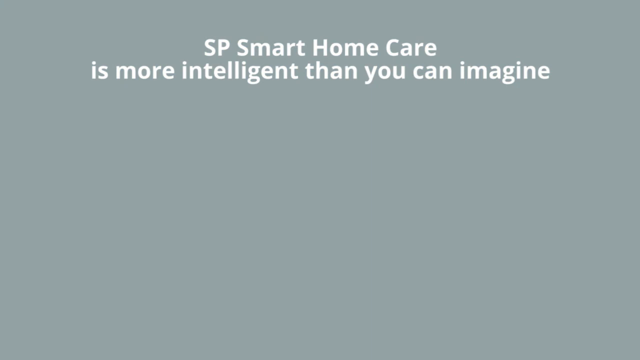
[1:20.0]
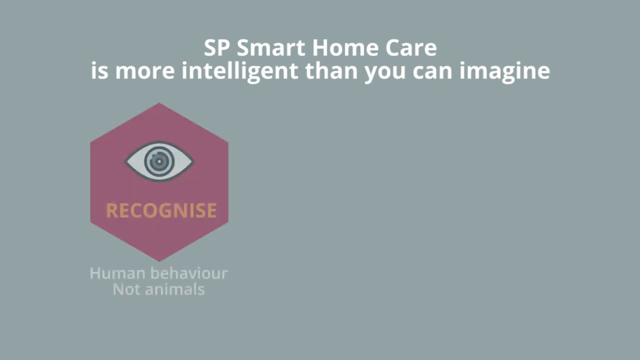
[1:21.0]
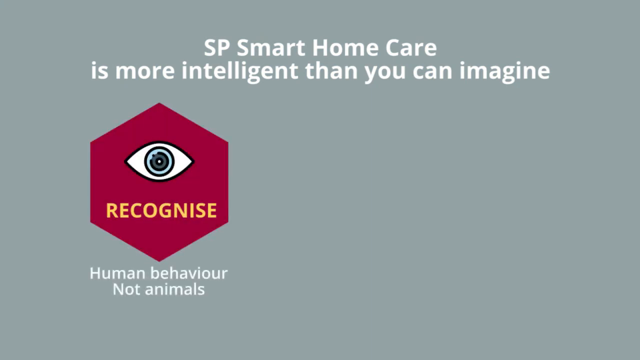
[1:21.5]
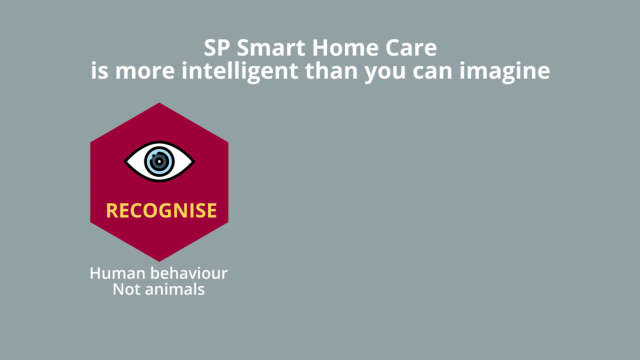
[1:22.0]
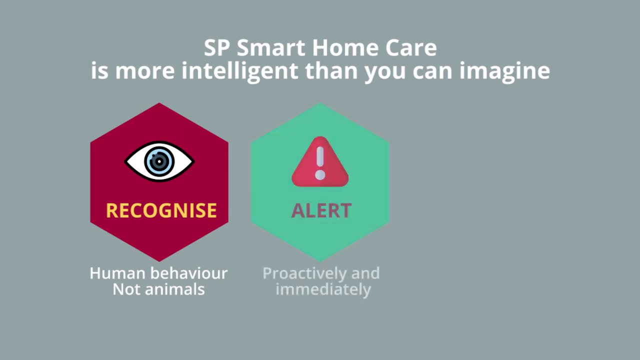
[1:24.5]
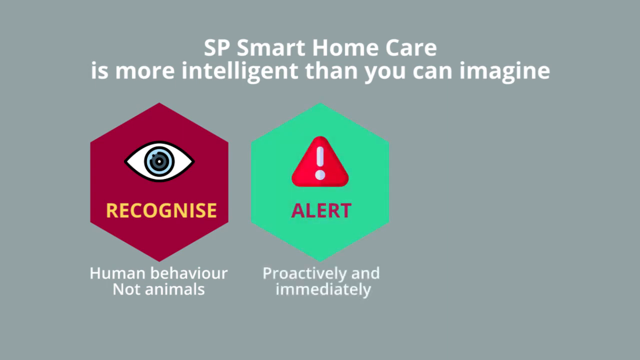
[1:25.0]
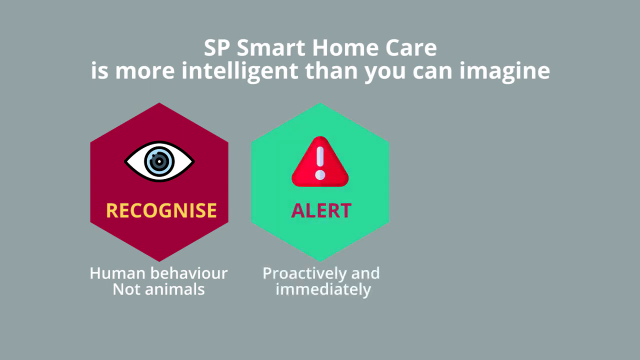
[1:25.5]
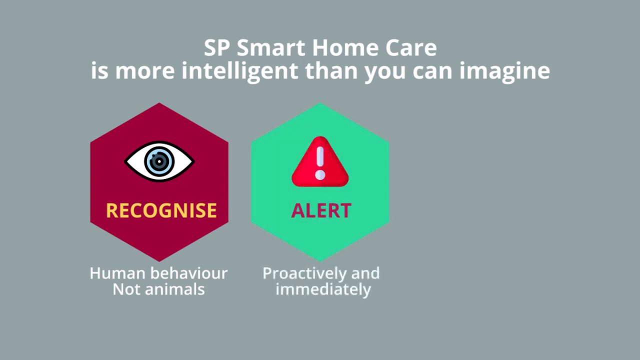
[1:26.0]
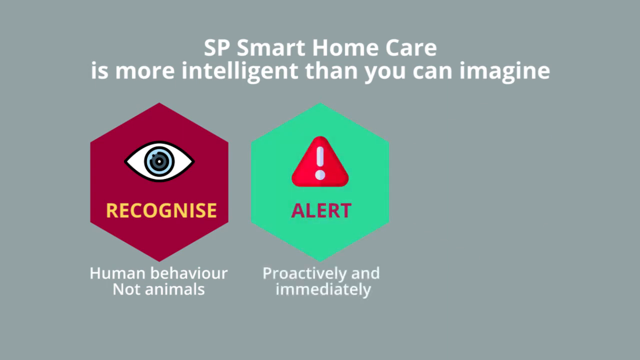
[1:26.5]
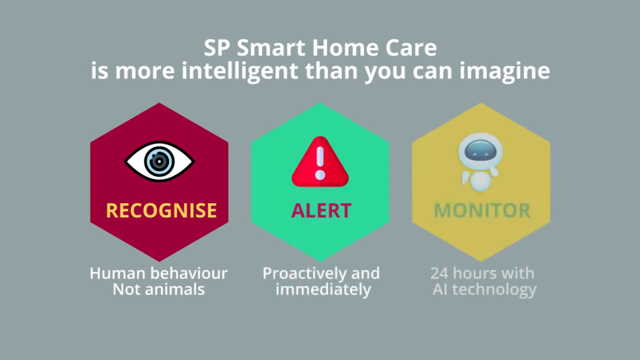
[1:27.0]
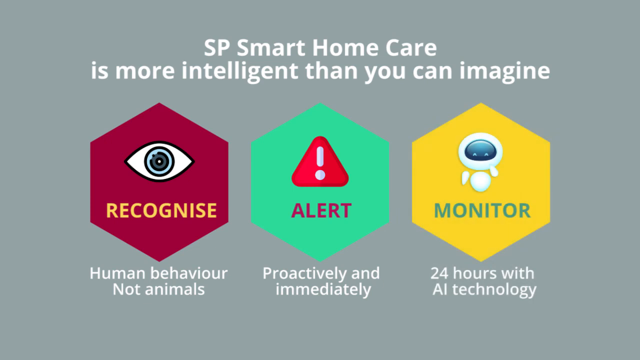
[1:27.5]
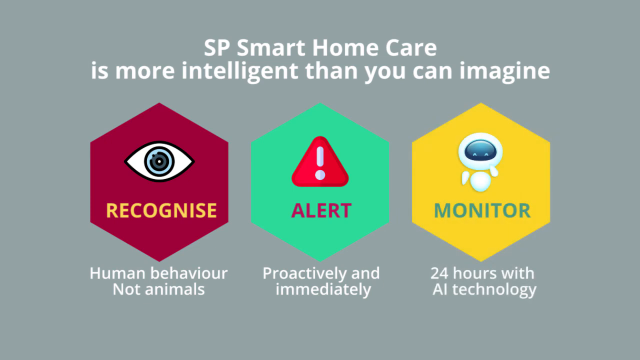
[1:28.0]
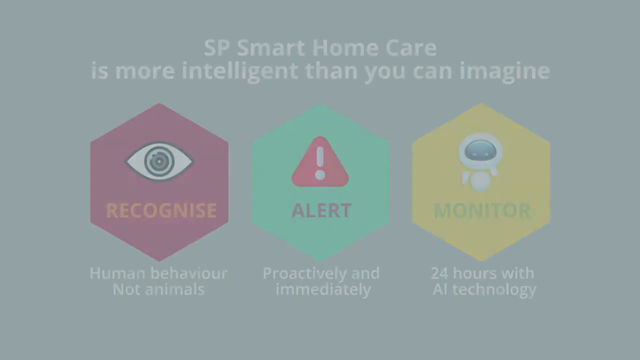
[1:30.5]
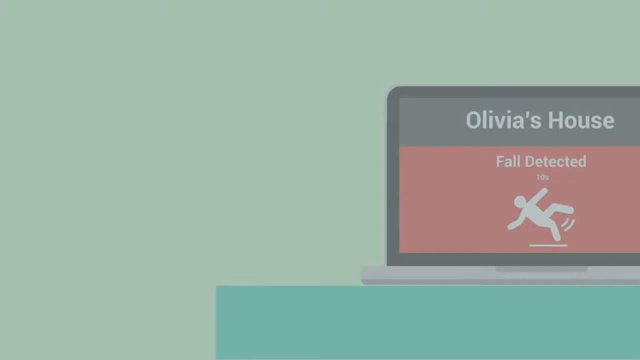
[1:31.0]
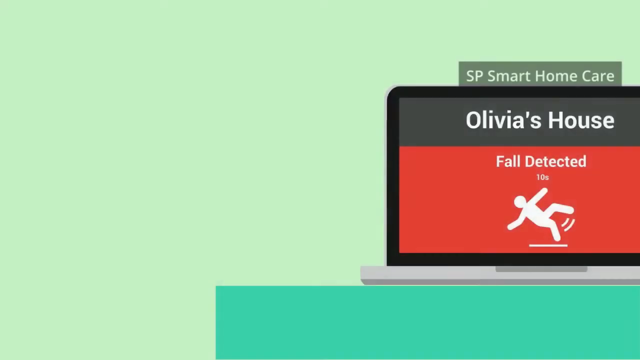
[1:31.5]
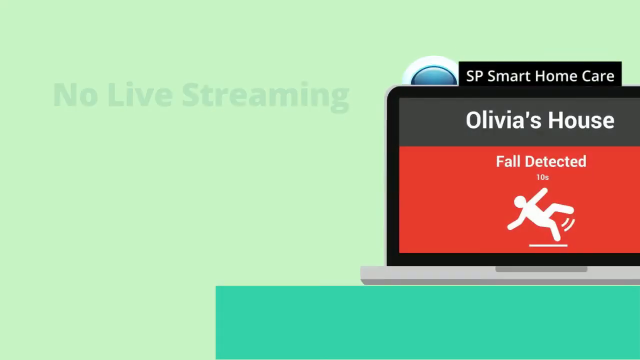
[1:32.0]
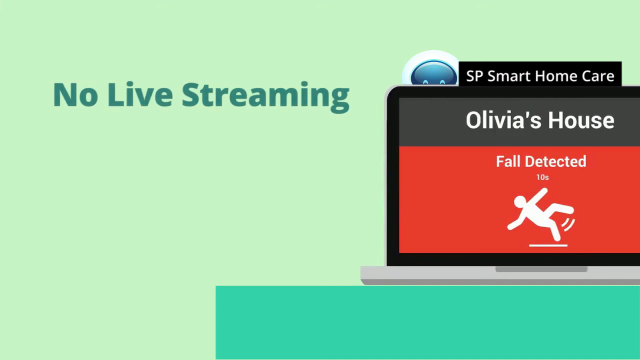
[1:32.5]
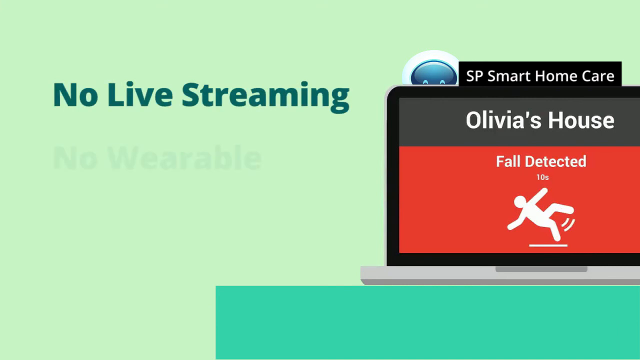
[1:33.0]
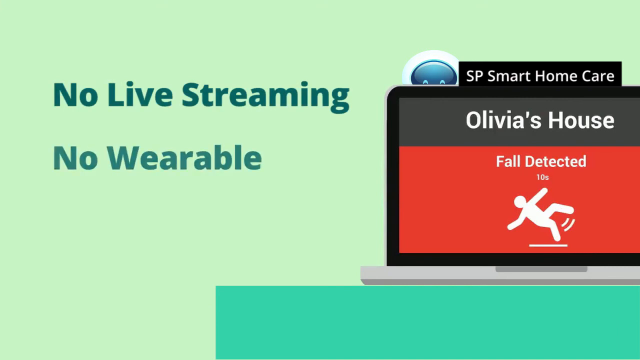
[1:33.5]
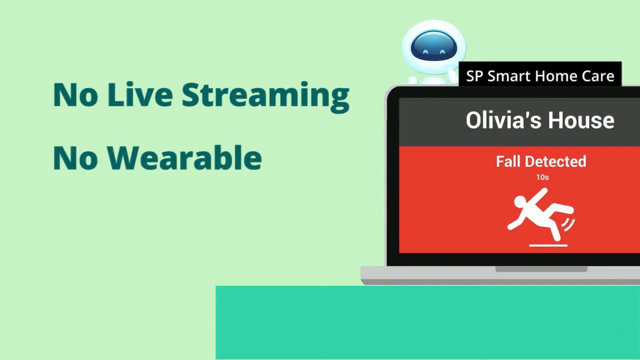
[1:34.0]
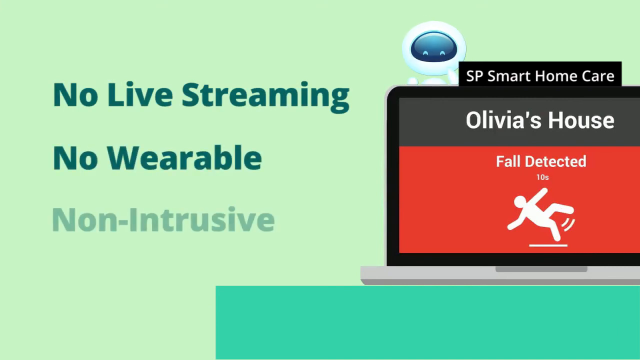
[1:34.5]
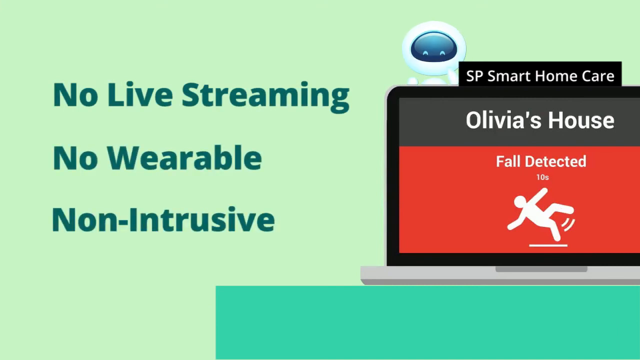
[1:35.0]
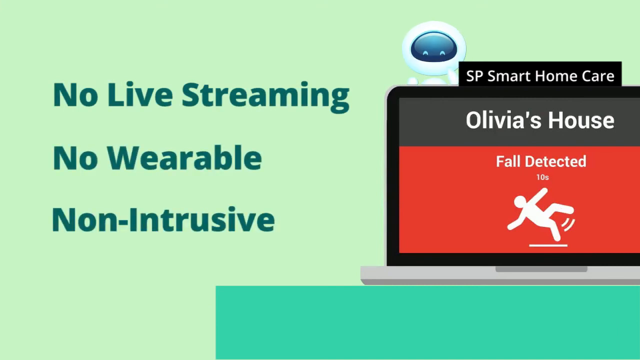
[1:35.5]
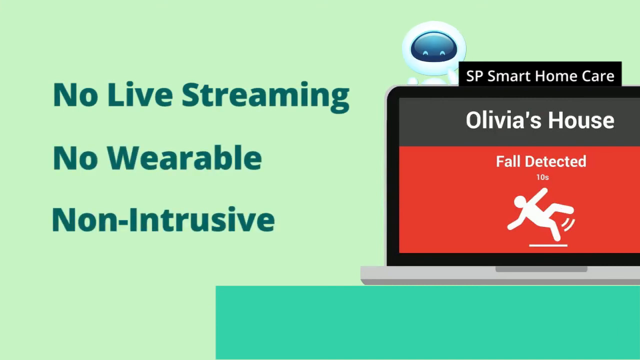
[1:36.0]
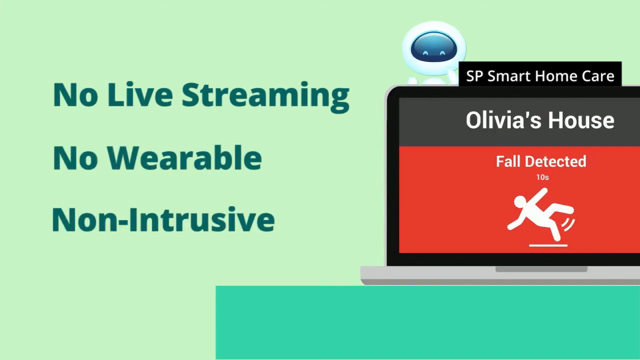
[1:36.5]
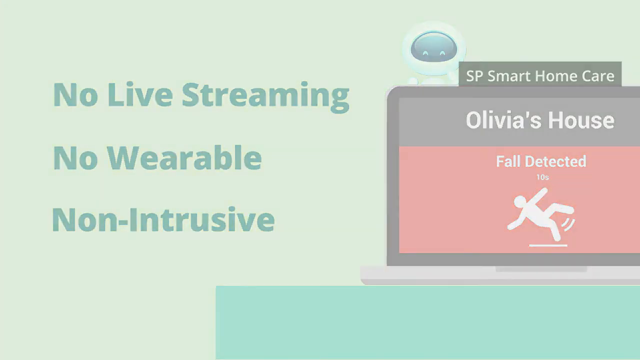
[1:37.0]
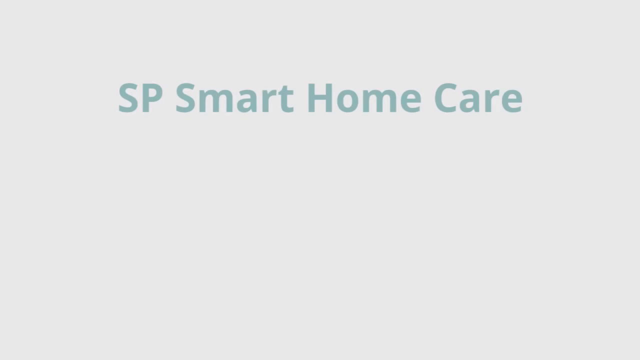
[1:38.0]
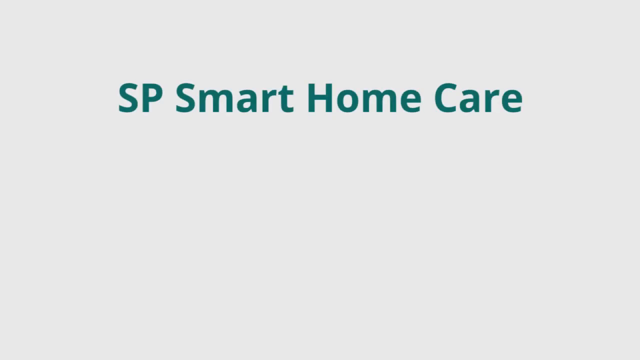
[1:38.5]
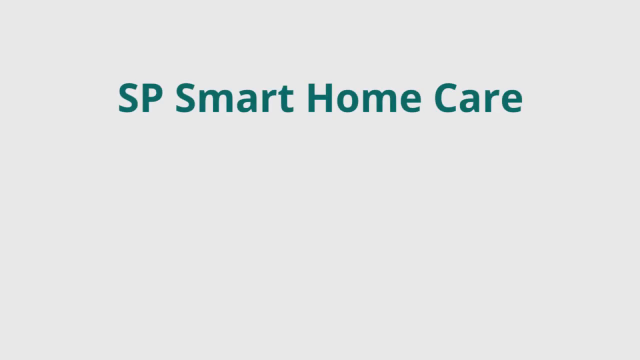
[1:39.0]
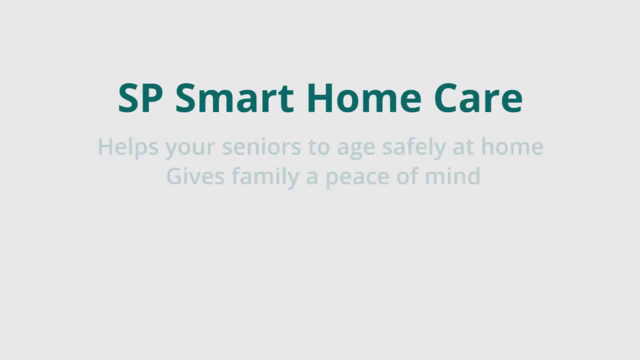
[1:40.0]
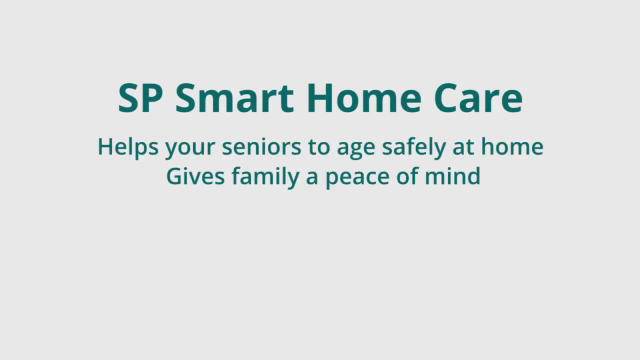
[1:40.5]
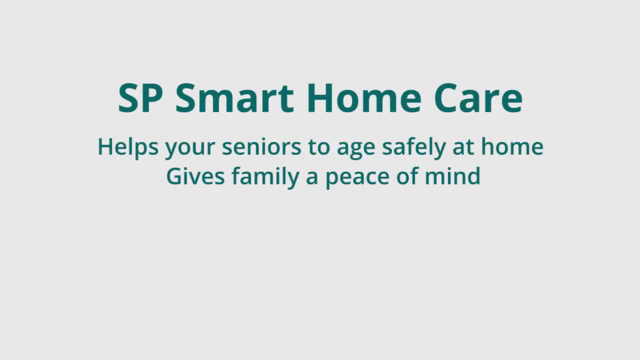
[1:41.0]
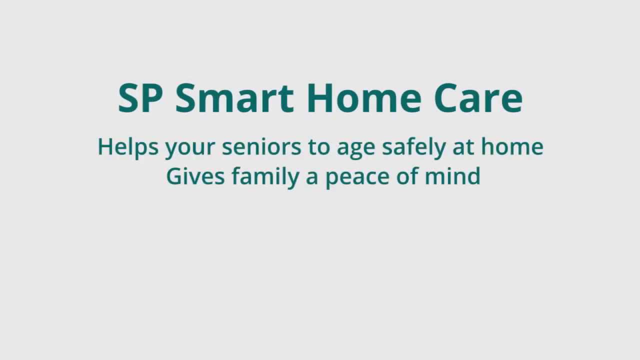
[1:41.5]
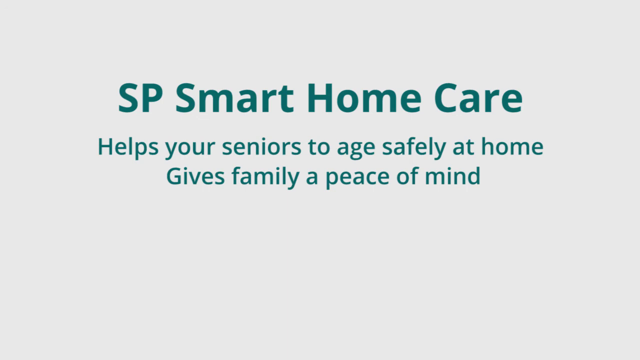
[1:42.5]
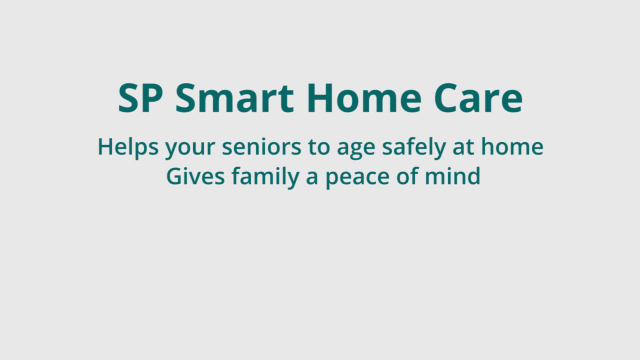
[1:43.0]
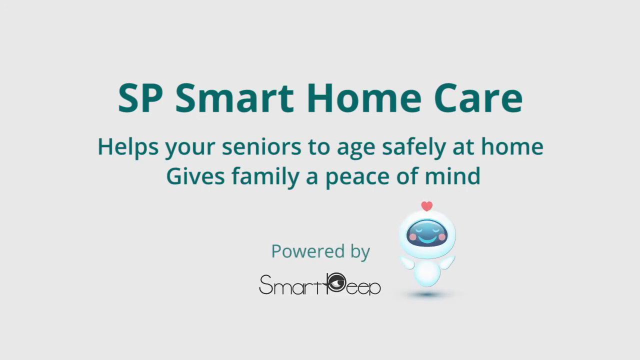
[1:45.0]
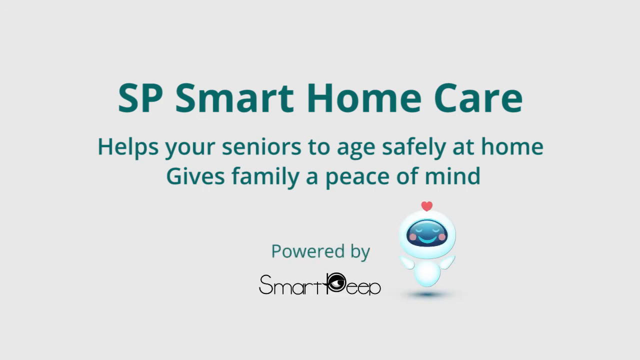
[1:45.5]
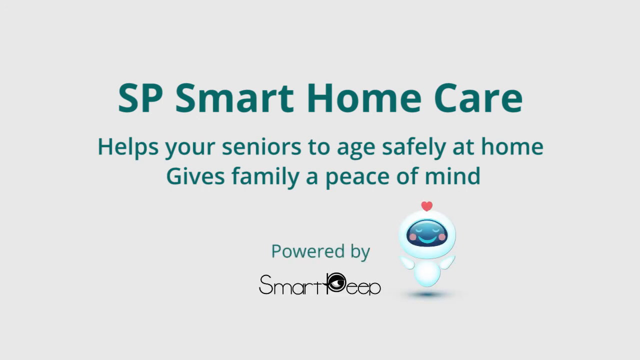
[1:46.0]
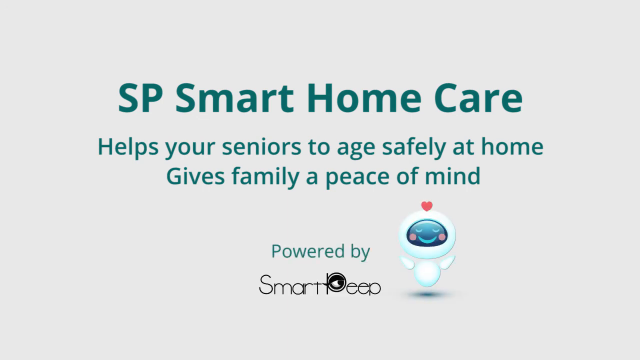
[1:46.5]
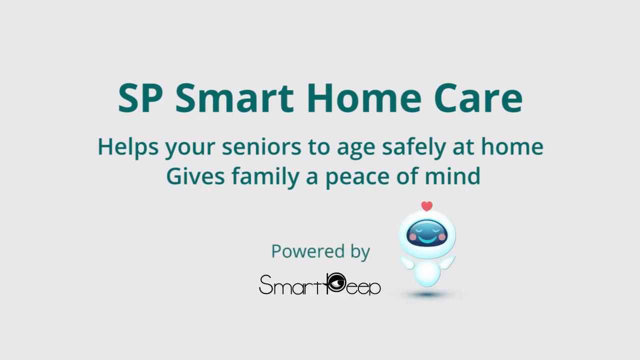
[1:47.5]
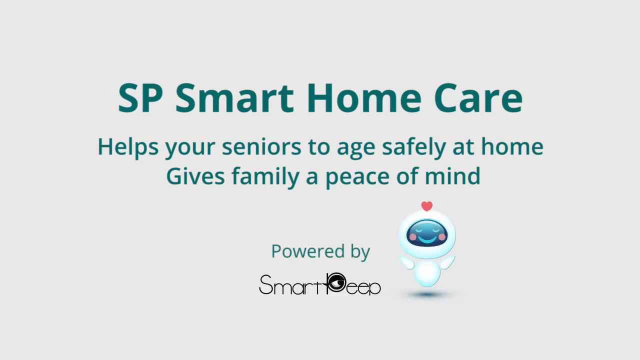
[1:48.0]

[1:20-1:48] A gray background shows the text "SP smart home care is more intelligent than you can imagine" in white. A red hexagon appears that says "recognize" with "human behavior not animals" below it, then a green hexagon with "alert" and "proactively and immediately" below it, and finally a yellow hexagon with "monitor" and "24 hours with AI technology" below it, each with a small diagram representing it. Another image shows a computer screen with a robot peeking over the top and, on the screen, "Olivia's house fall detected". Text beside it states that there is no live streaming, no wearable, and that it is non-intrusive. A grey background appears with green text that says "SP smart home care helps your seniors to age safely at home, gives family a peace of mind. Powered by smart peep", along with a small image of a cartoon robot with a heart above its head.